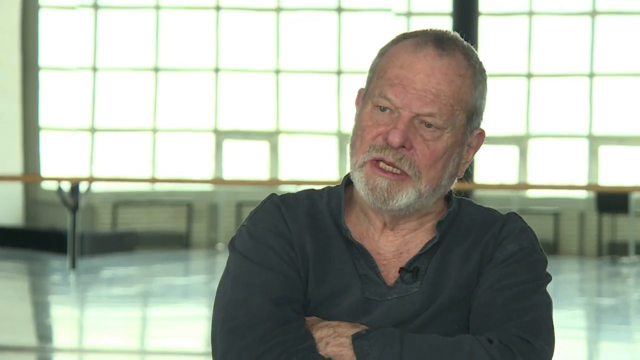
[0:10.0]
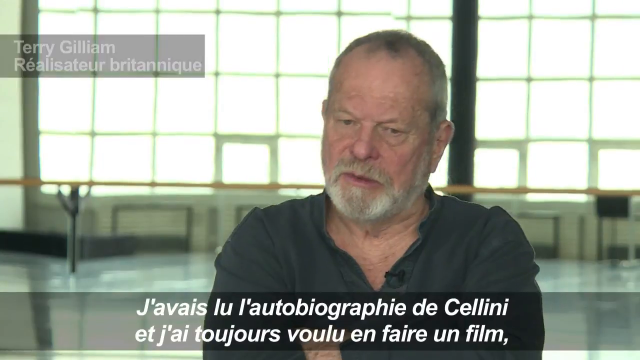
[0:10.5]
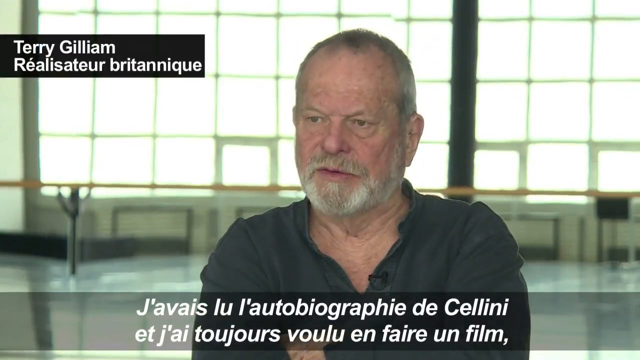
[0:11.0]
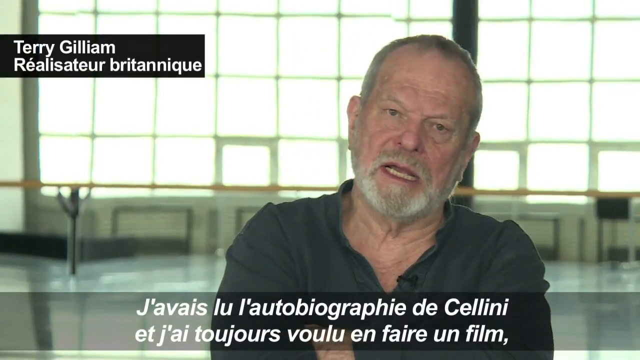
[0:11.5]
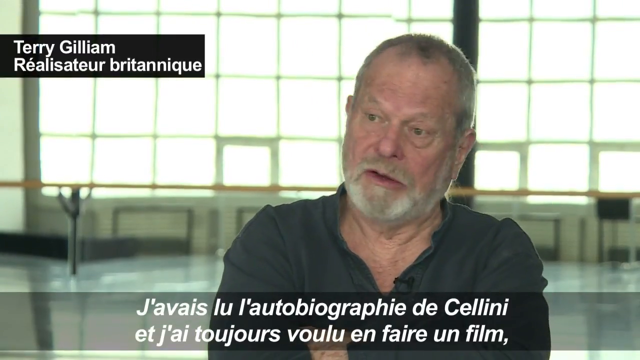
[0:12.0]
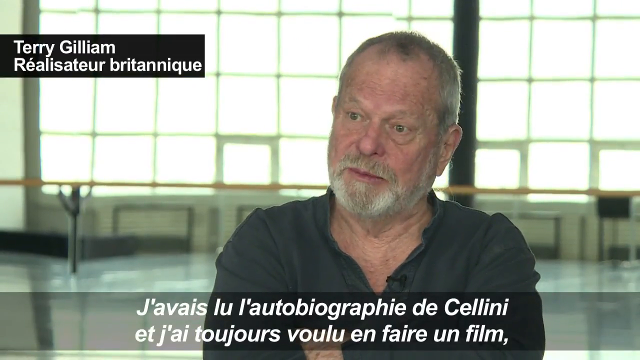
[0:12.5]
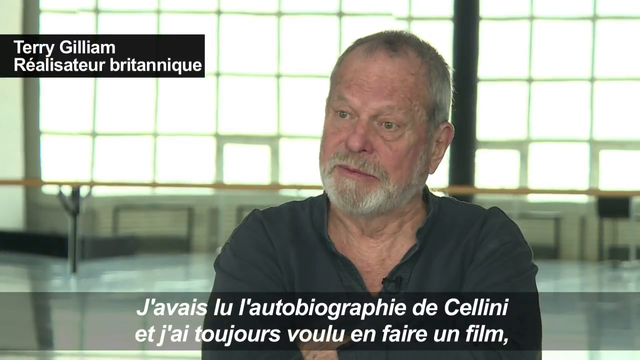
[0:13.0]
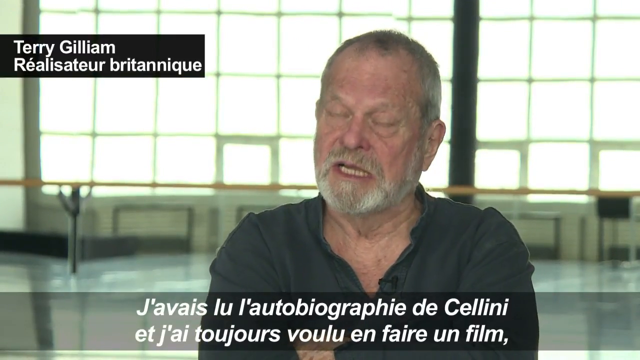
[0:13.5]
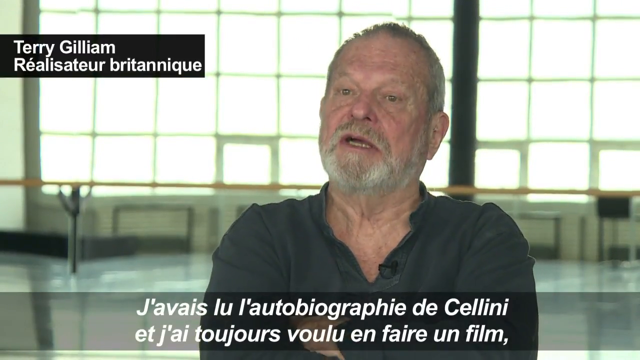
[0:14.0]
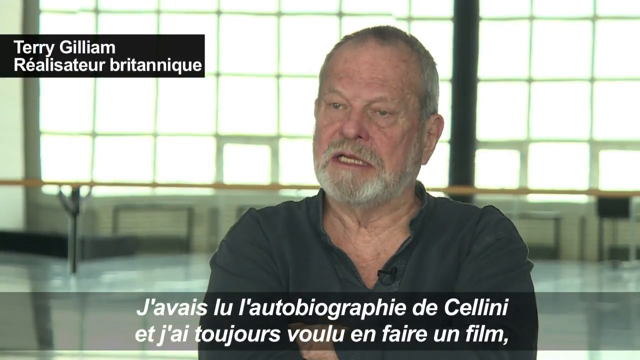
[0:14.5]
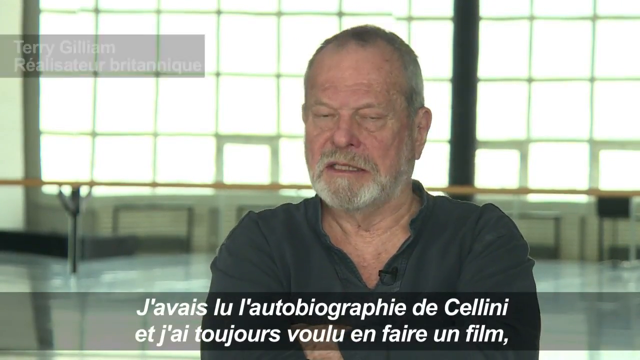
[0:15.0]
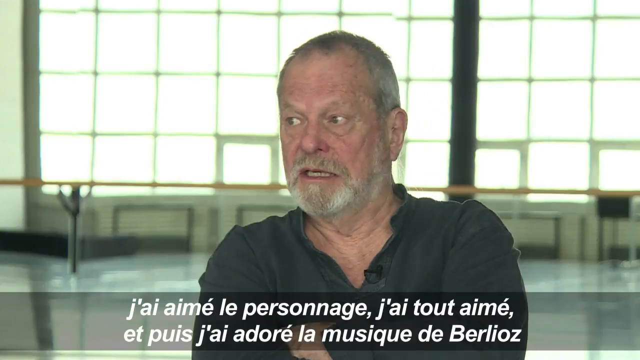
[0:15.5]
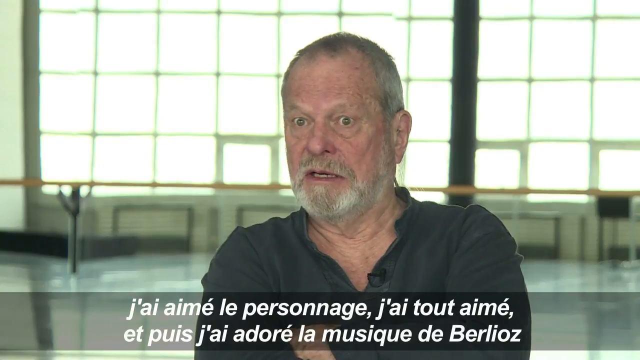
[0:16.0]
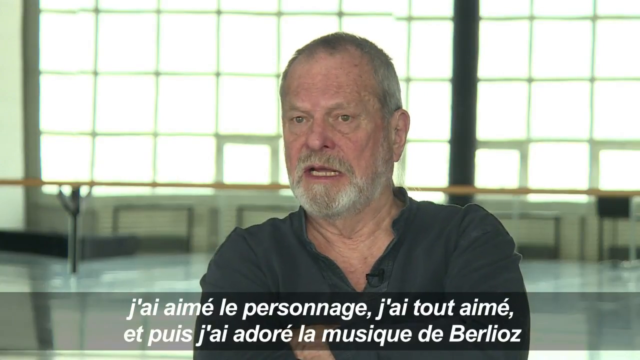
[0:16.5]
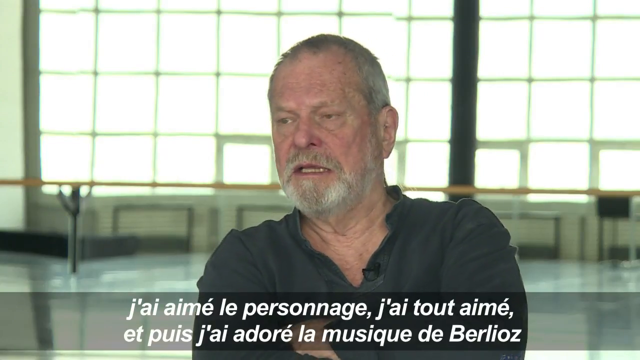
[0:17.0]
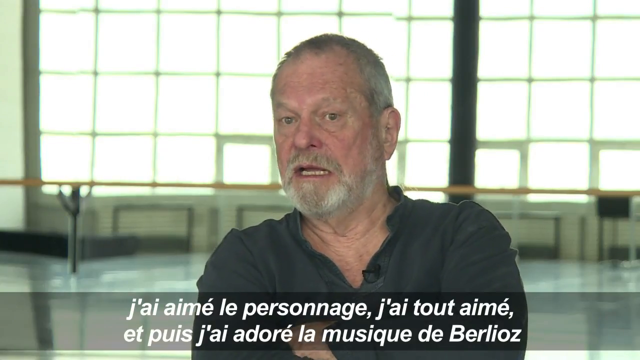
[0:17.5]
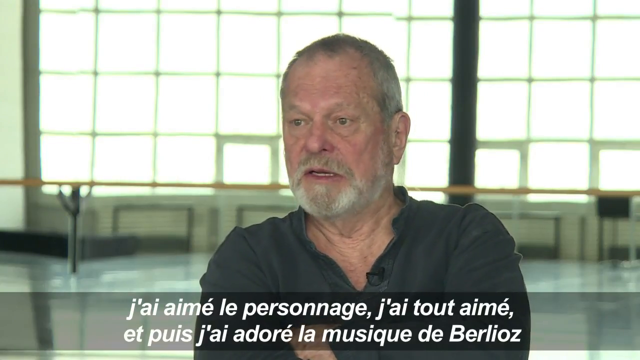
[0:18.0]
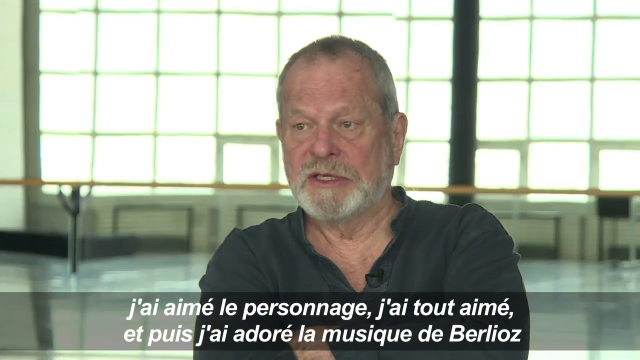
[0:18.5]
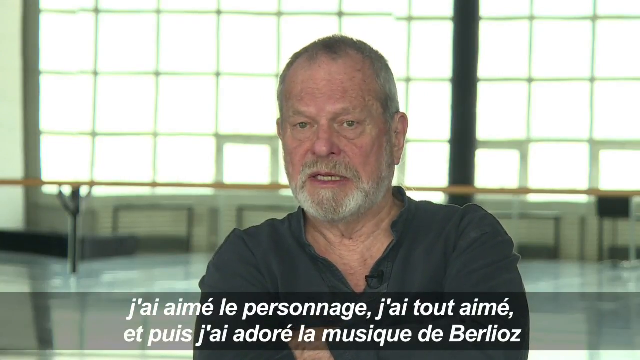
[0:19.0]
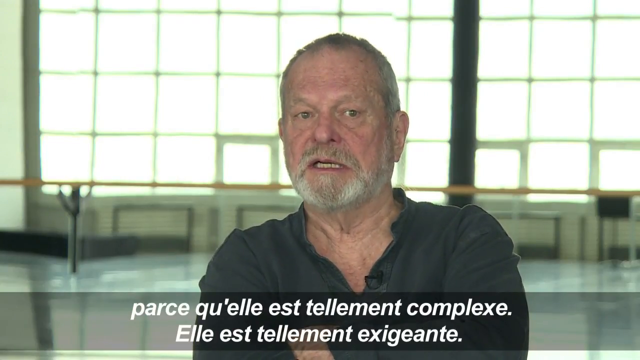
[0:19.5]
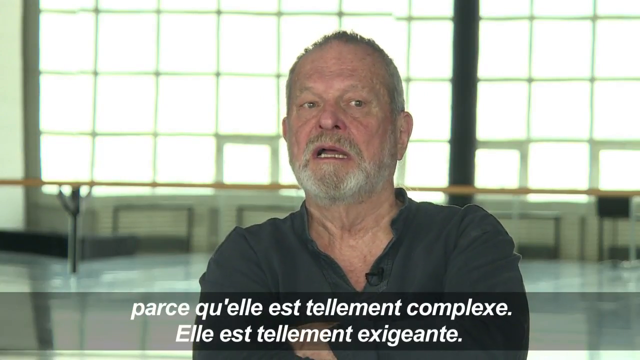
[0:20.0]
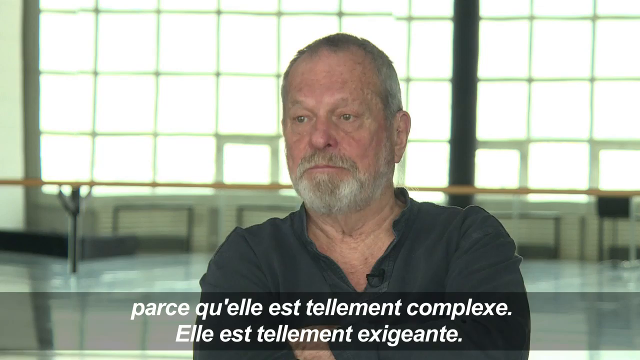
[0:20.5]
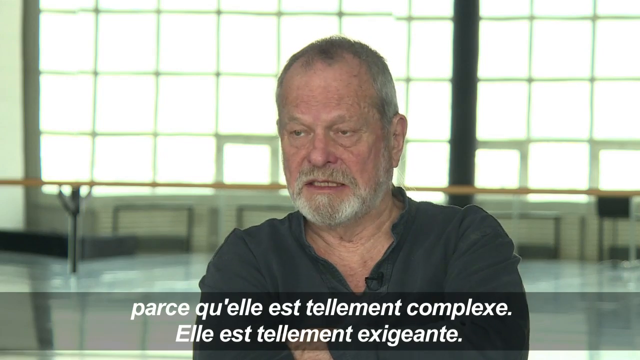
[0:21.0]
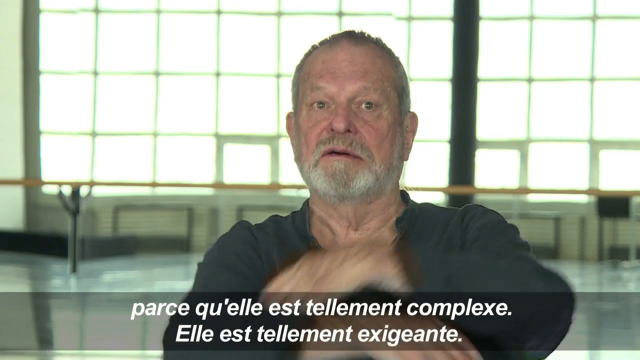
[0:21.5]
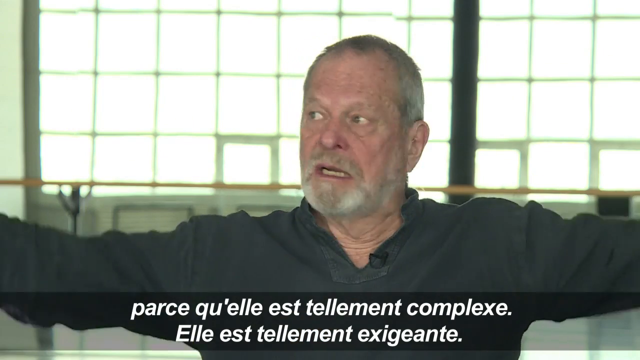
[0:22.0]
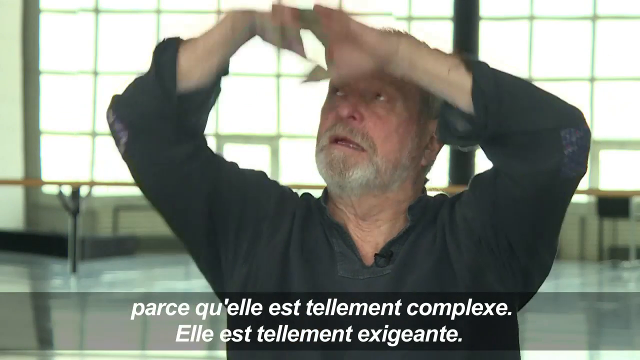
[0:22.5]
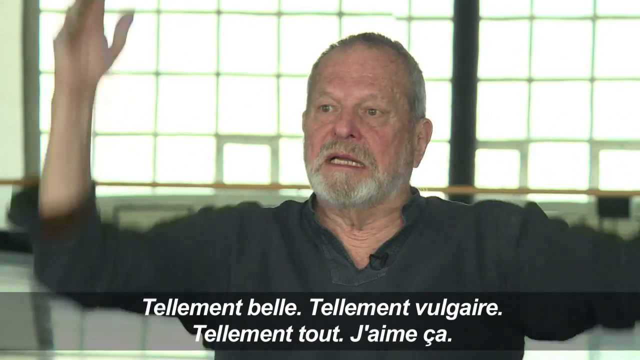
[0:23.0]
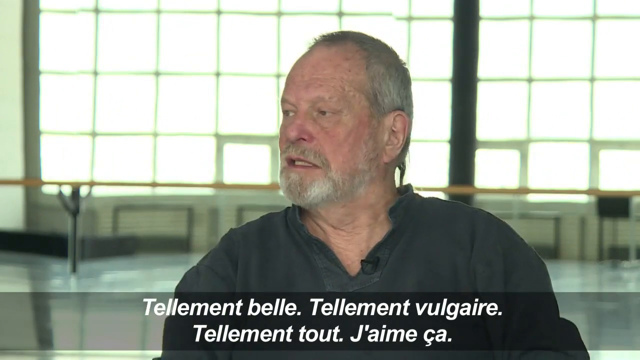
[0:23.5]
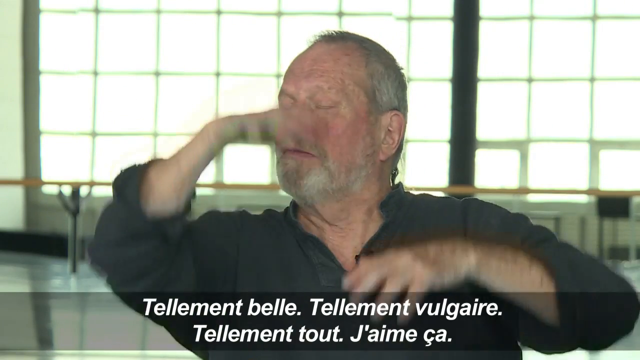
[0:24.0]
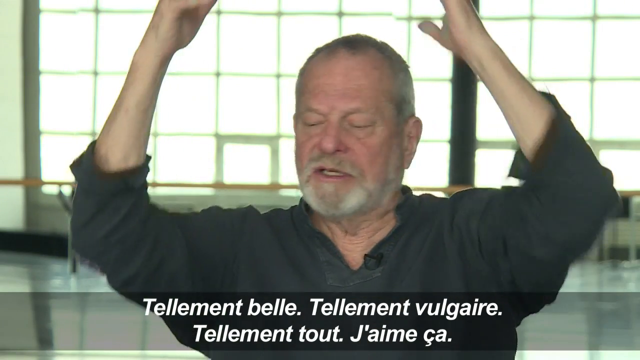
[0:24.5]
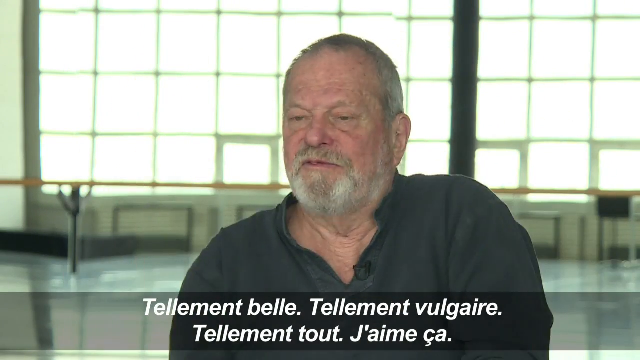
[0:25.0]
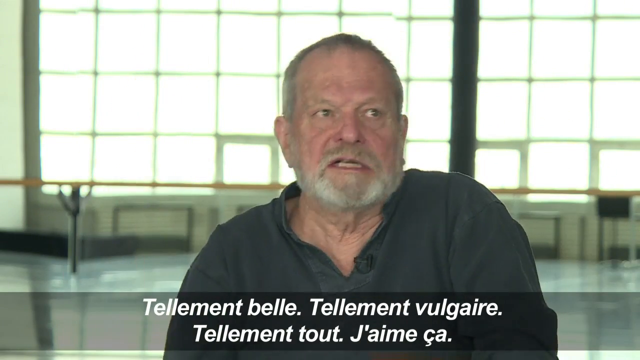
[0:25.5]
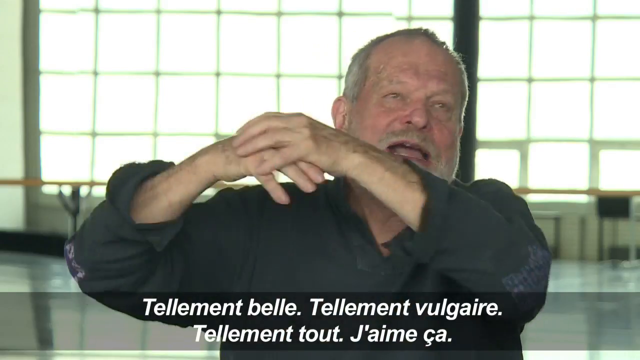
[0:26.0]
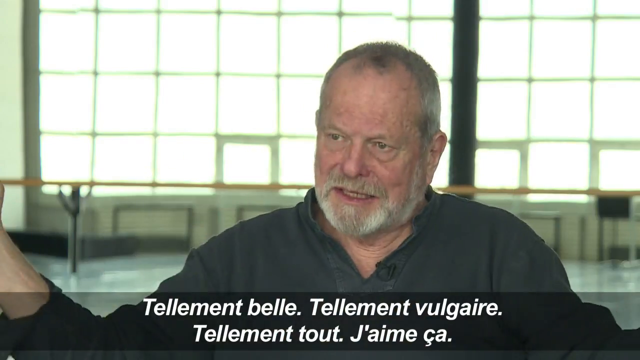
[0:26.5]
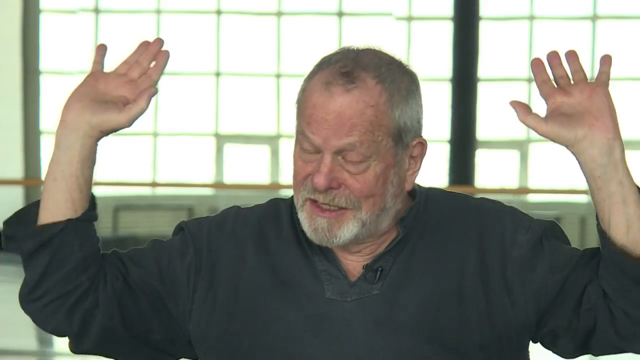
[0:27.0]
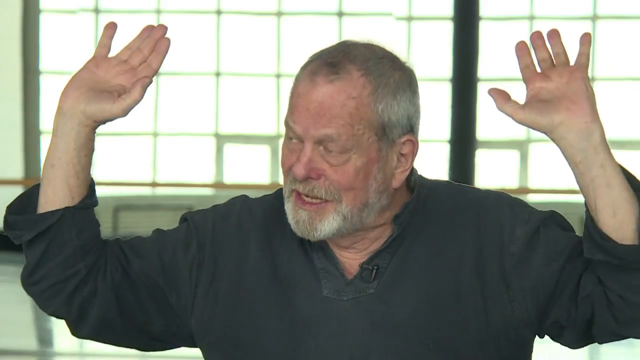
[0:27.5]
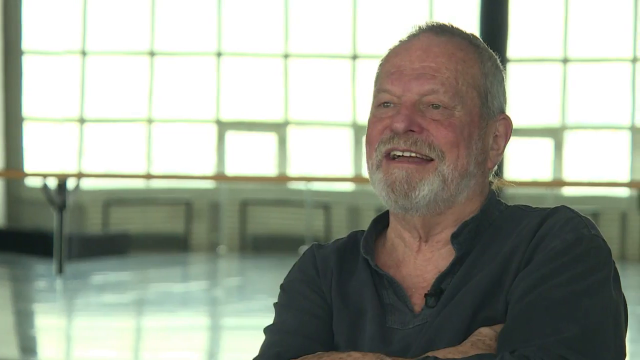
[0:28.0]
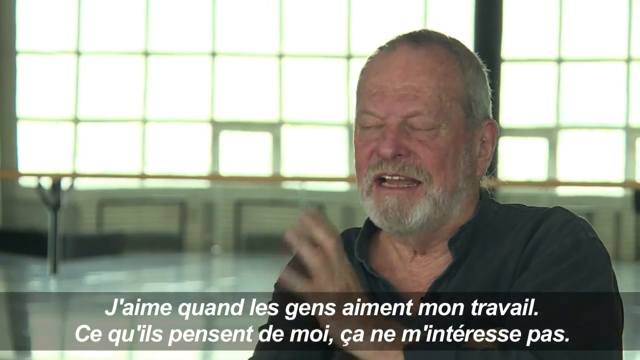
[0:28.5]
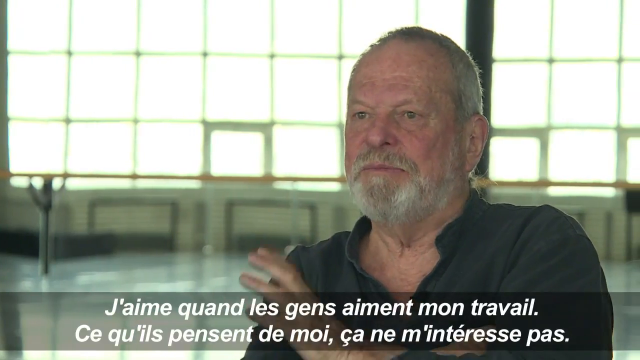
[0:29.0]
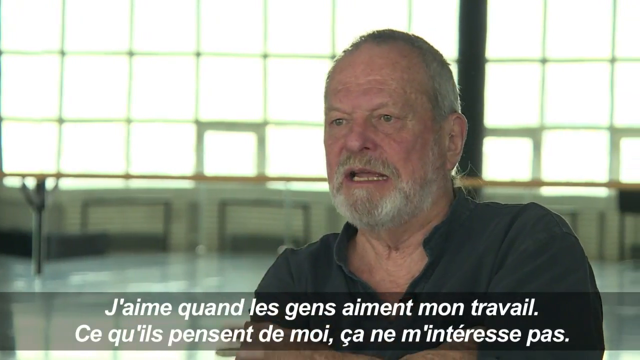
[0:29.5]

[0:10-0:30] The man faces the camera, seen from the chest up, with his hands apparently either crossed in front of him or resting on his lap. He appears to be speaking in another language, as text at the bottom seems to translate what he says; the text is in another language, possibly French. He closes his eyes, and his head nods up and down and a bit side to side as he speaks. In the background, light comes through the panels of the windows, suggesting a sunny day. Different text continues to appear at the bottom as he speaks. At one point, for emphasis, his arms come up completely straight out to his sides and then come back down to his lap, with his head moving back and forth. At another point he brings his hands up with his palms facing the camera, seemingly to emphasize something big or significant.